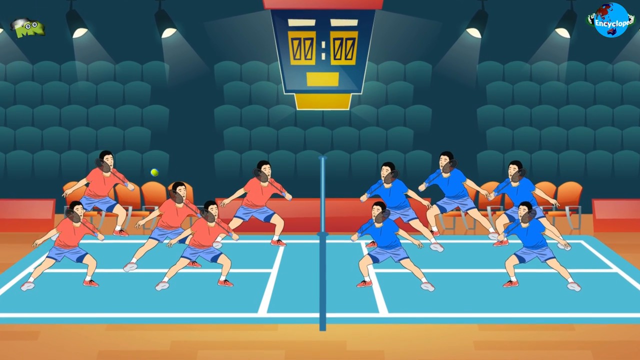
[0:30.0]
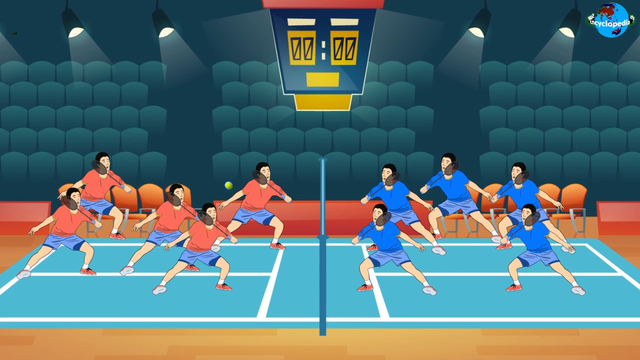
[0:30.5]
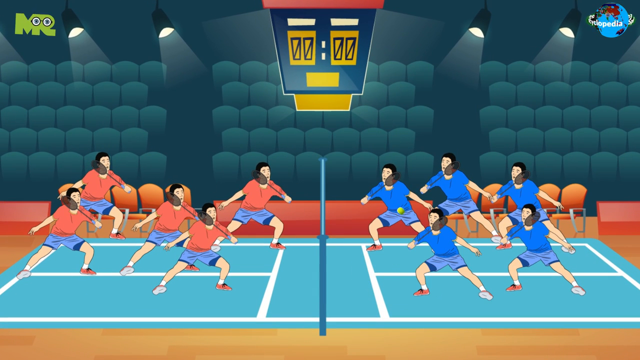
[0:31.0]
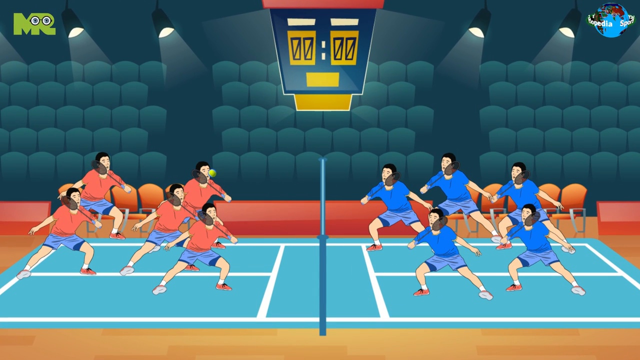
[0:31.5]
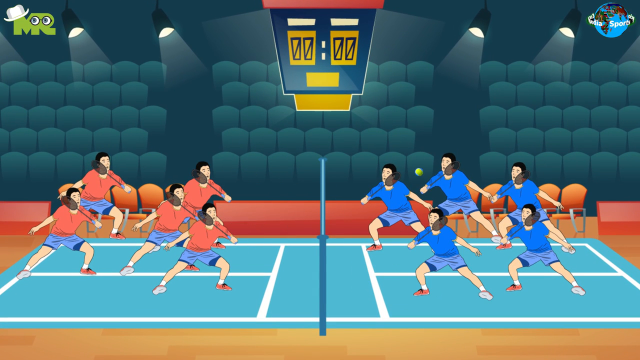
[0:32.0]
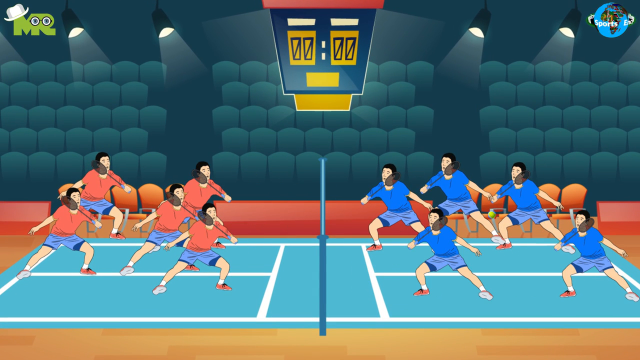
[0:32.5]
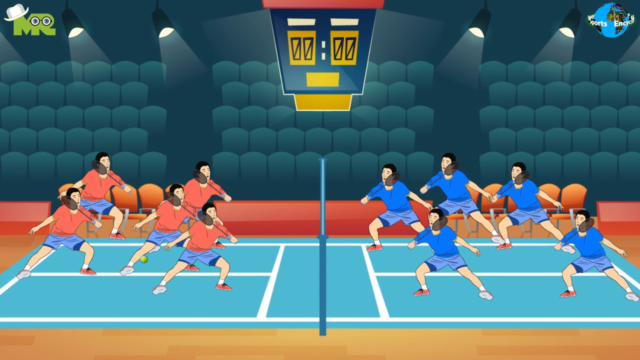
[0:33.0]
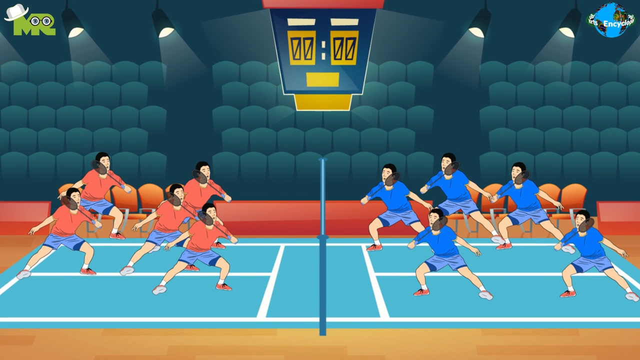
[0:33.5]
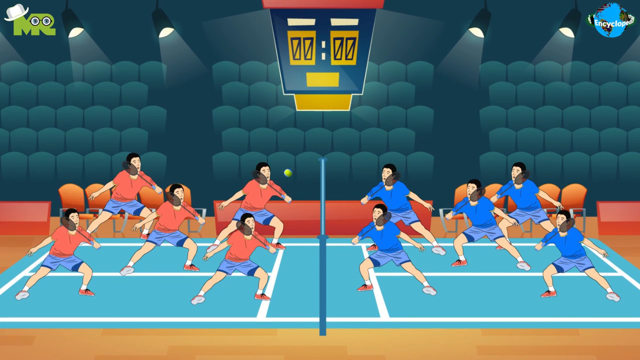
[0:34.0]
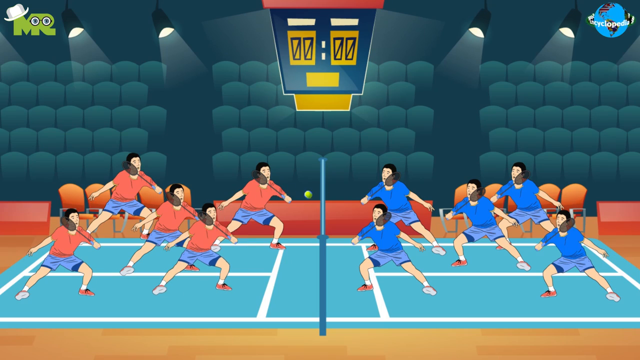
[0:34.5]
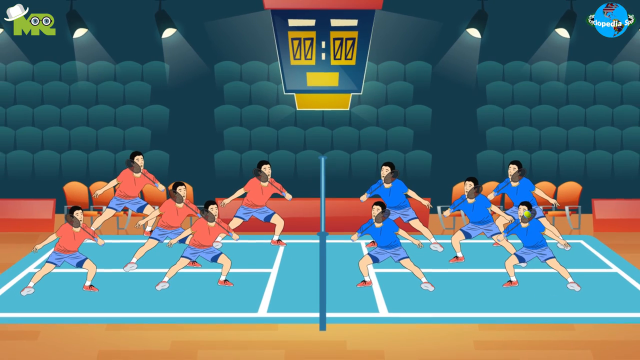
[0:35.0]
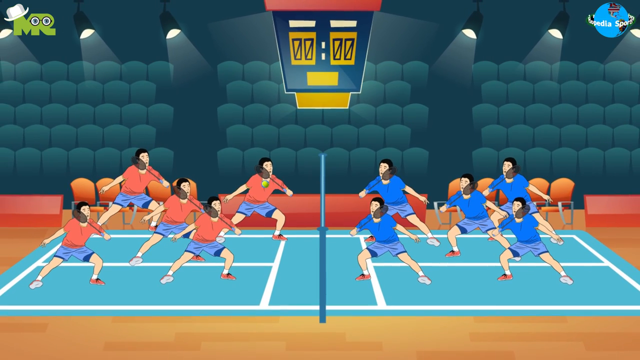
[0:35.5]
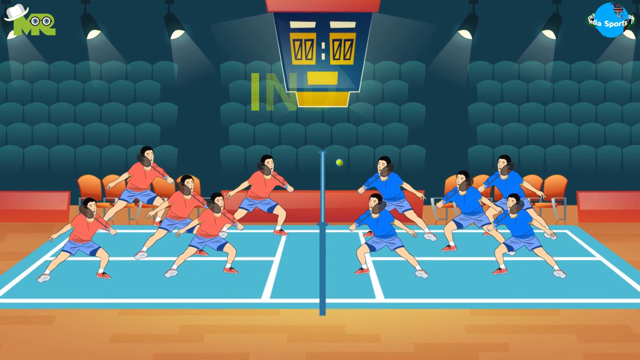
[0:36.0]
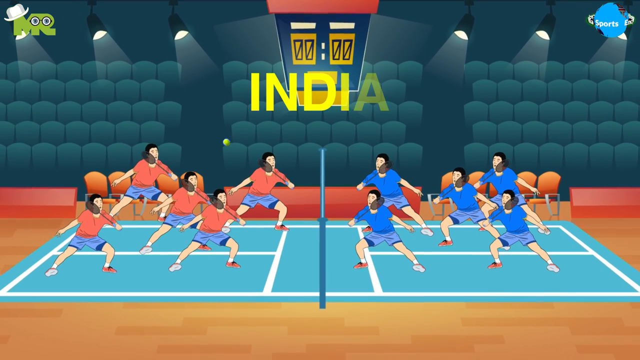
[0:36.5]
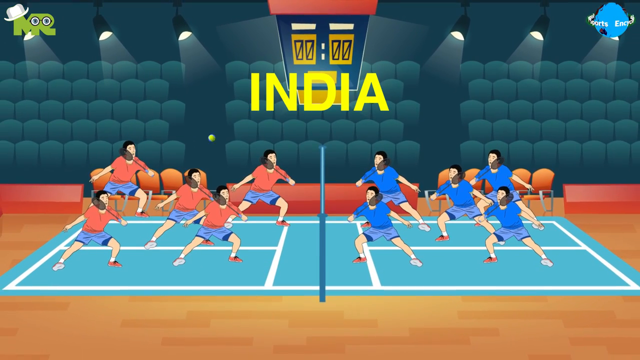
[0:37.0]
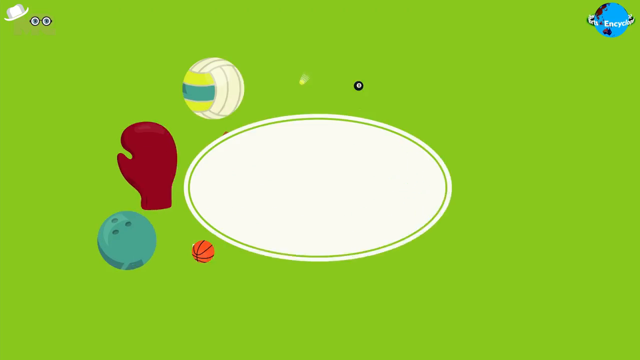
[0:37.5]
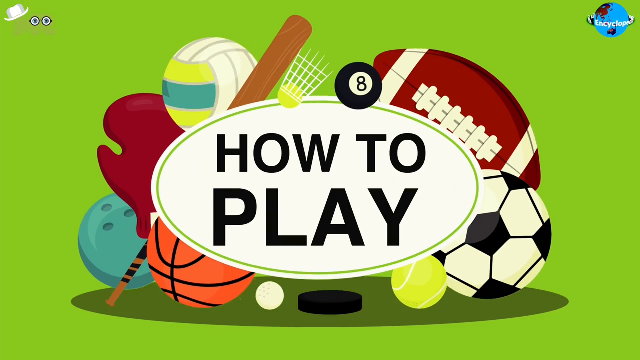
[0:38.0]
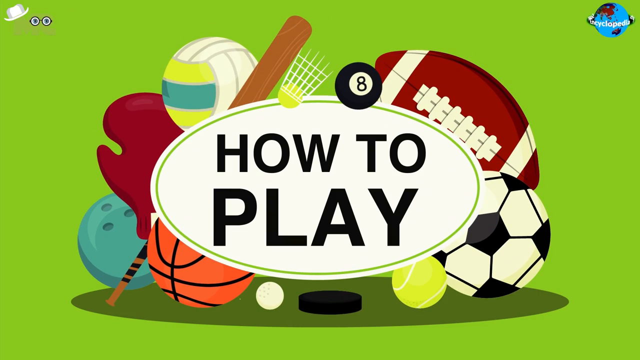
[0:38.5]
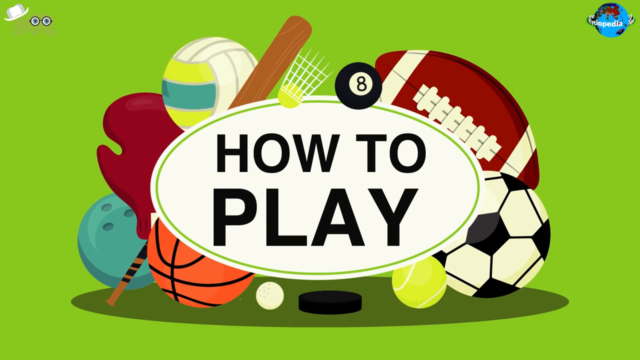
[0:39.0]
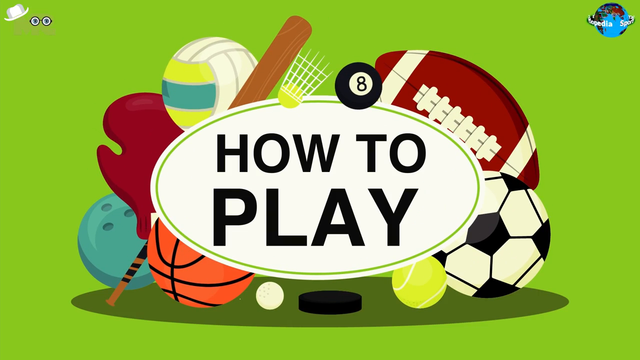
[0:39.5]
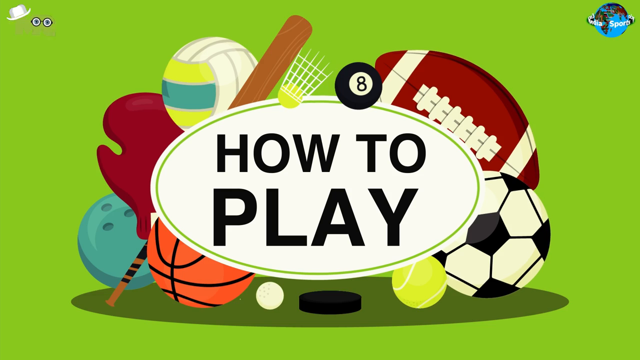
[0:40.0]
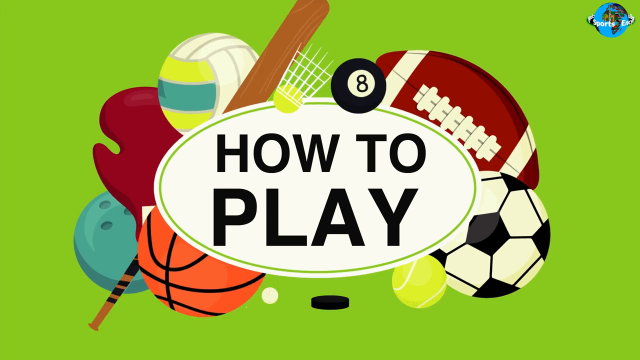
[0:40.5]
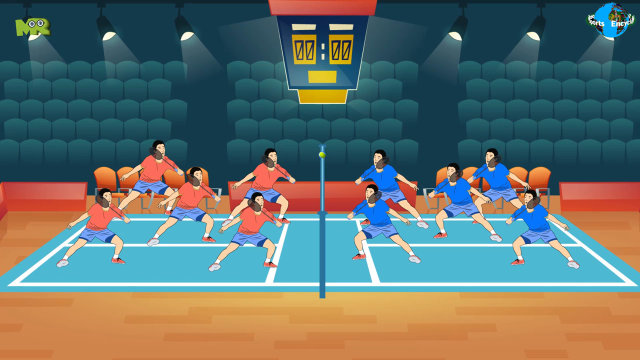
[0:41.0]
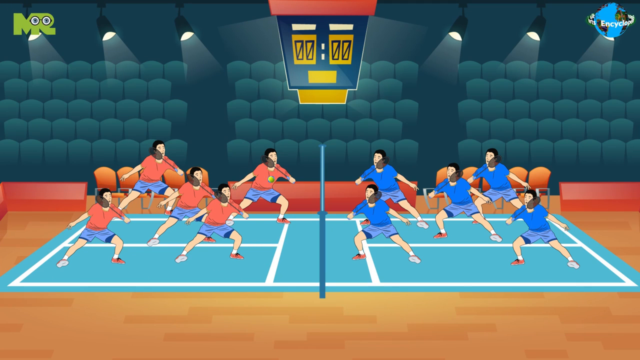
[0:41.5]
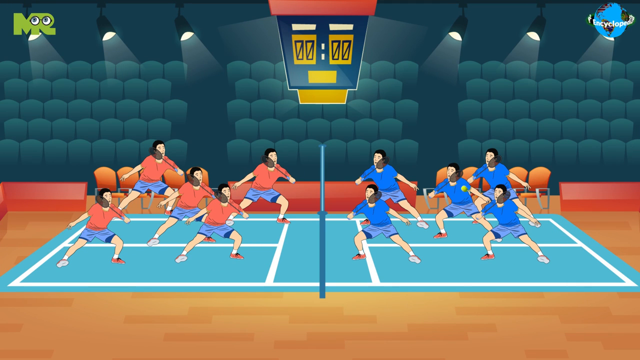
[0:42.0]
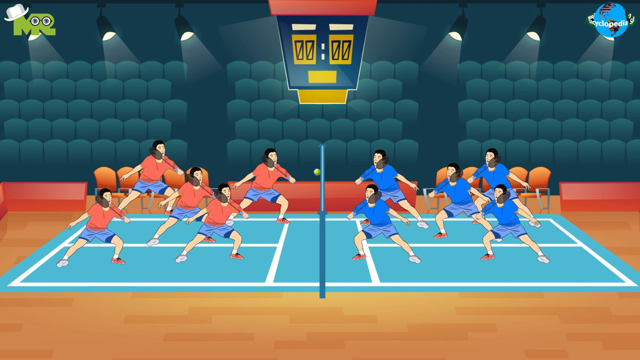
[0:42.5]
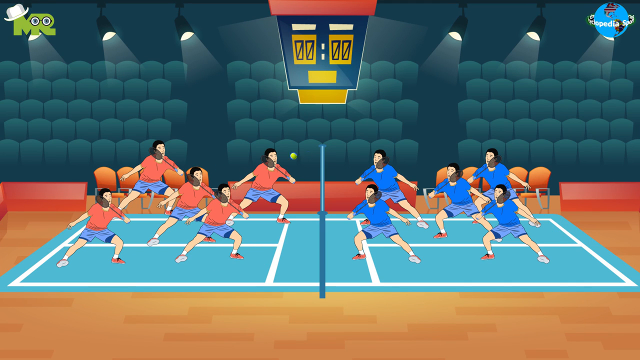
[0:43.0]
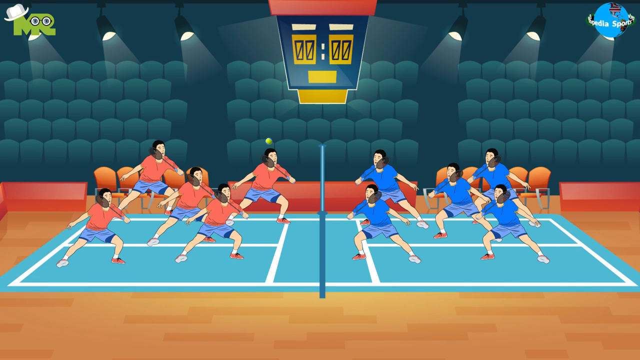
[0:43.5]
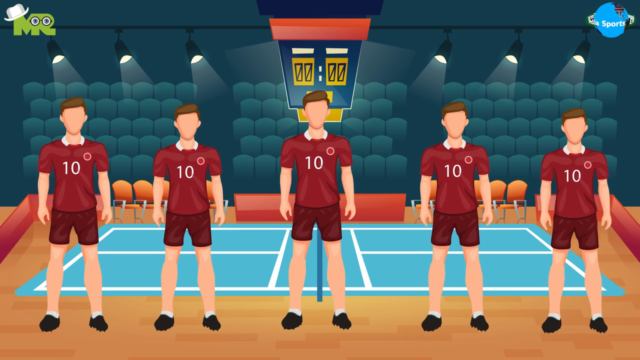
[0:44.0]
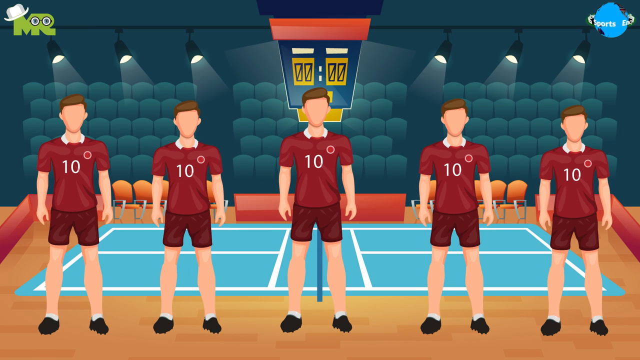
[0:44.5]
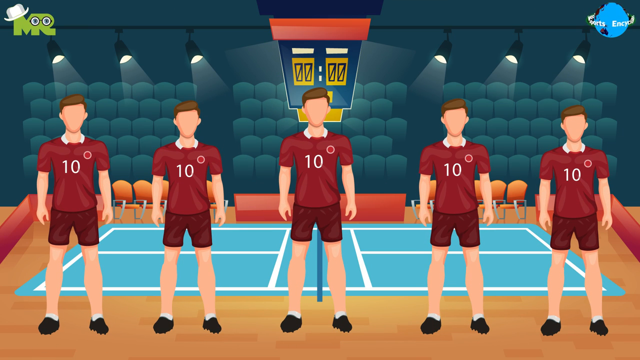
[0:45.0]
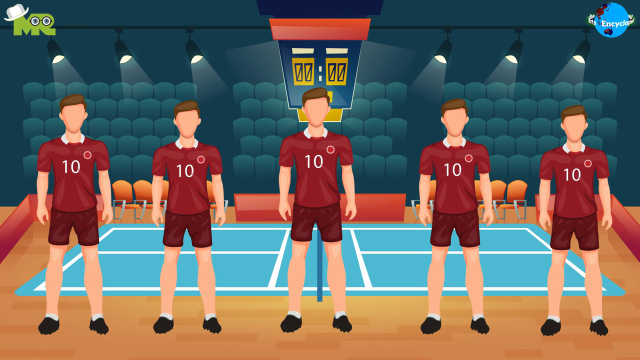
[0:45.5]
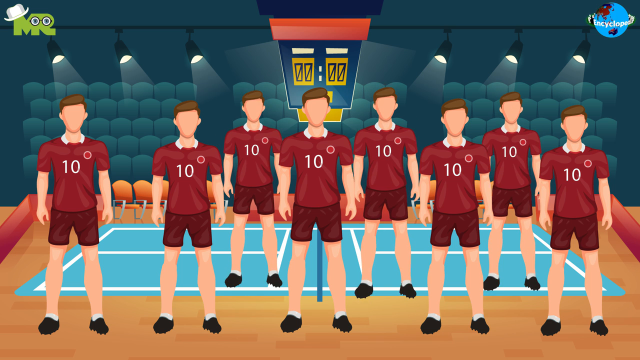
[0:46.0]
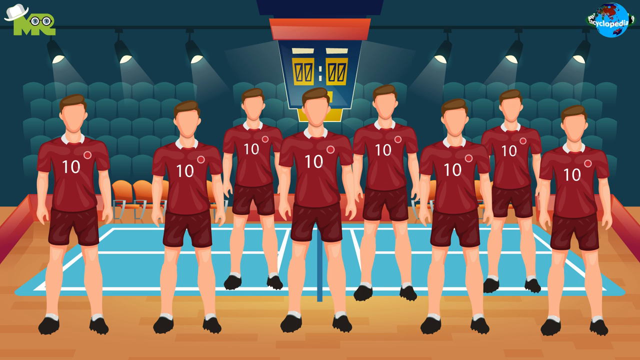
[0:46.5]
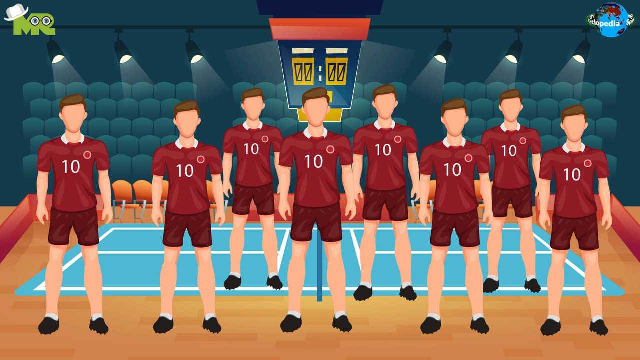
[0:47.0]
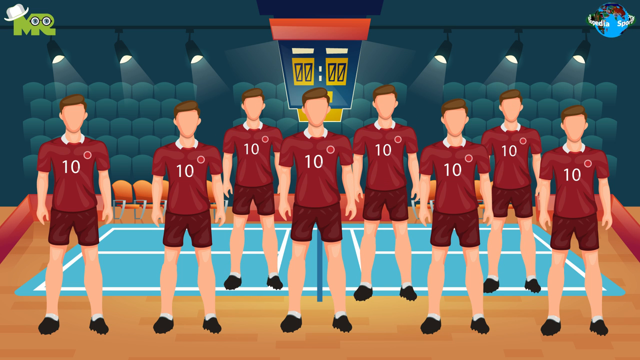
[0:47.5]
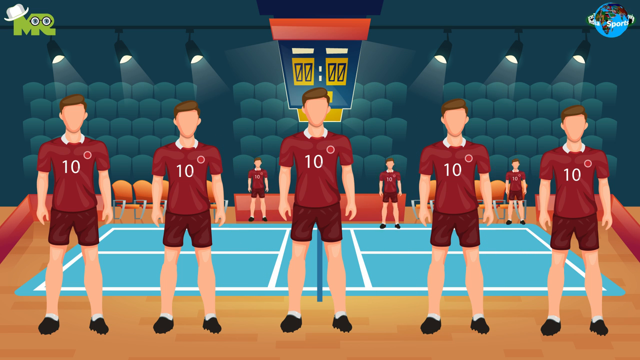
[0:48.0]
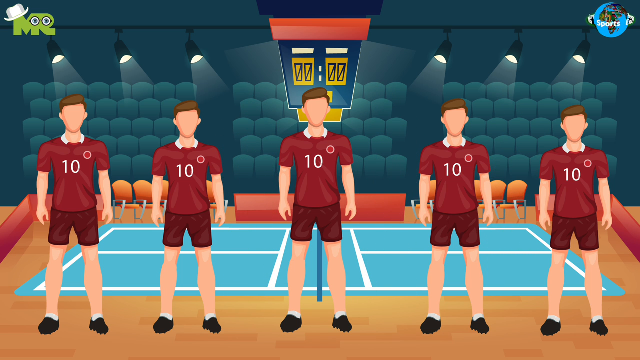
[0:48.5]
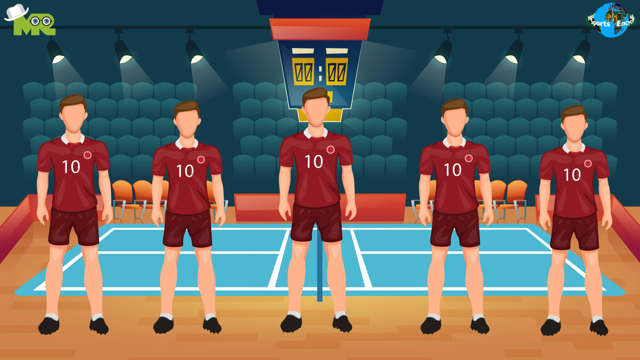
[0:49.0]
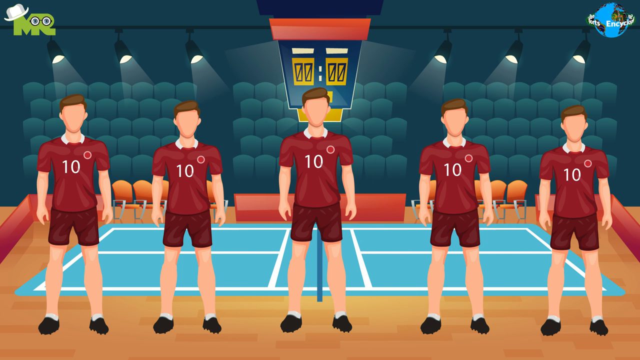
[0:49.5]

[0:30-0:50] The same tennis scene continues, with the players moving stiffly around and hitting the tennis ball. Yellow all-caps text reading "INDIA" appears at the top of the screen. Then a graphic similar to the opening one appears, this time reading "HOW TO PLAY" in all caps, still surrounded by sports equipment, including an 8 ball, a badminton ball and a tennis ball, on more of a green background. The game with the red team and blue team is shown again. Five members of the red team are shown, all looking basically identical, with the same hairstyle and the same jersey. A couple more red team members flash up for a second, making it seem like there are eight members, but then they shrink down and disappear.